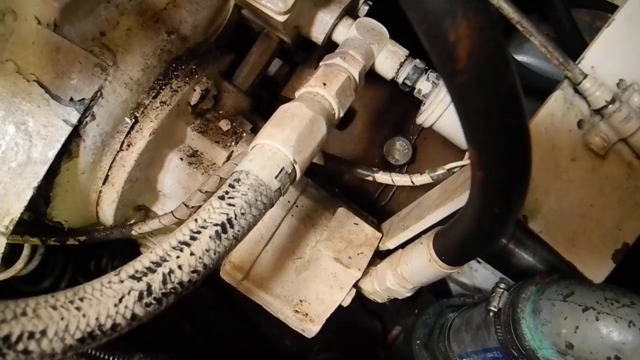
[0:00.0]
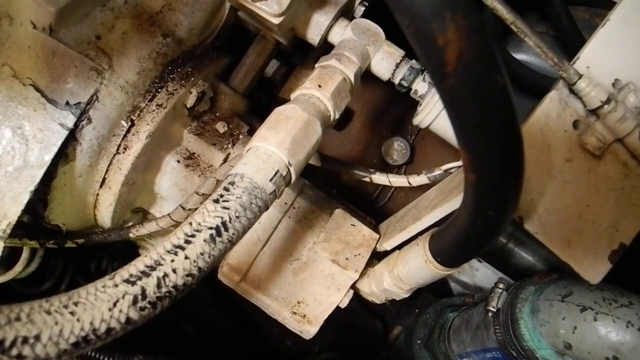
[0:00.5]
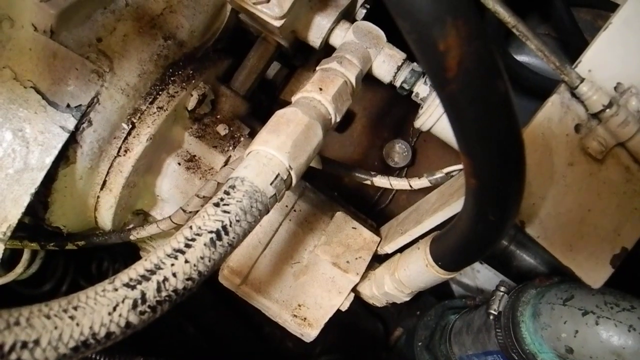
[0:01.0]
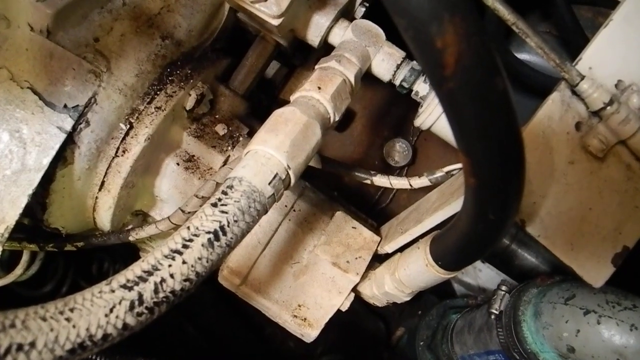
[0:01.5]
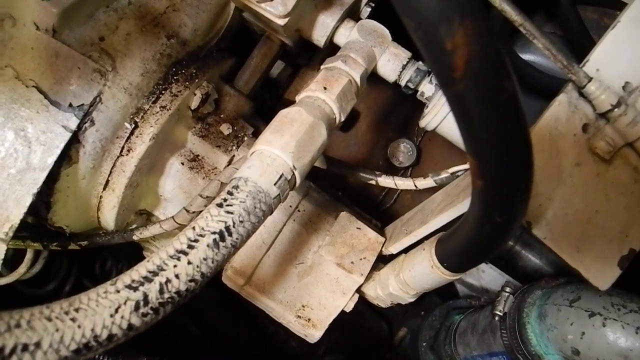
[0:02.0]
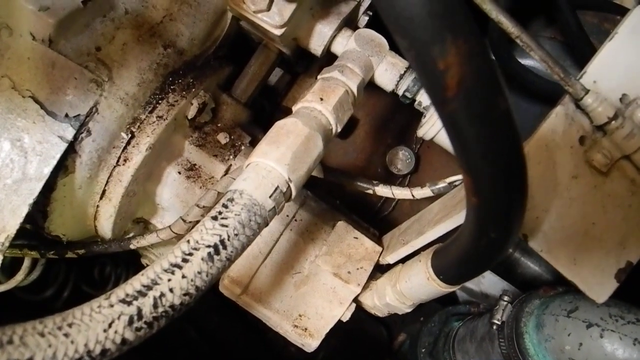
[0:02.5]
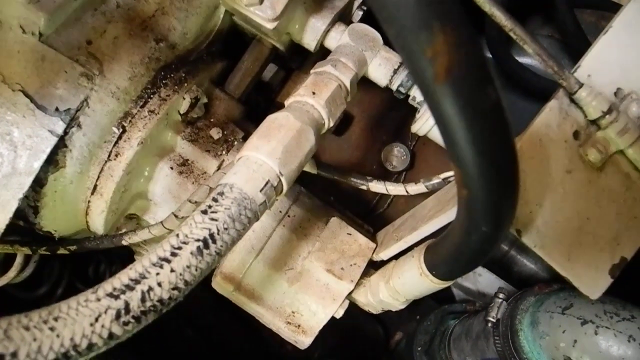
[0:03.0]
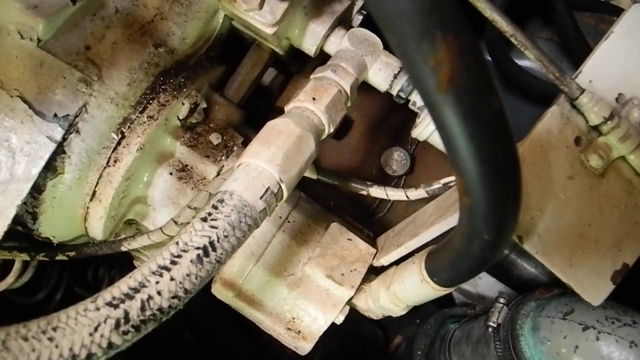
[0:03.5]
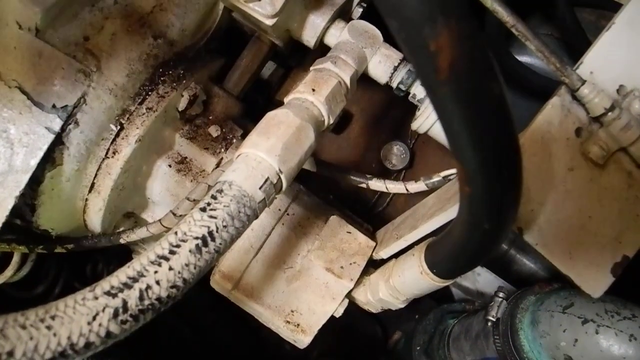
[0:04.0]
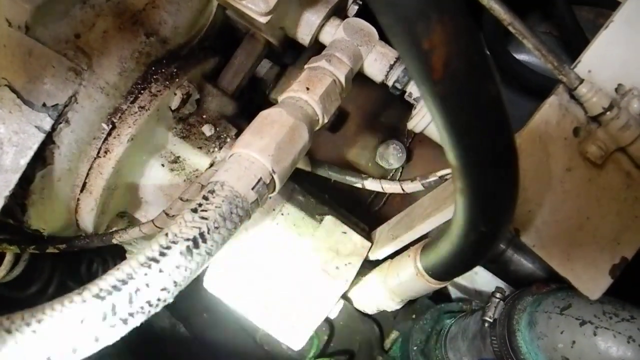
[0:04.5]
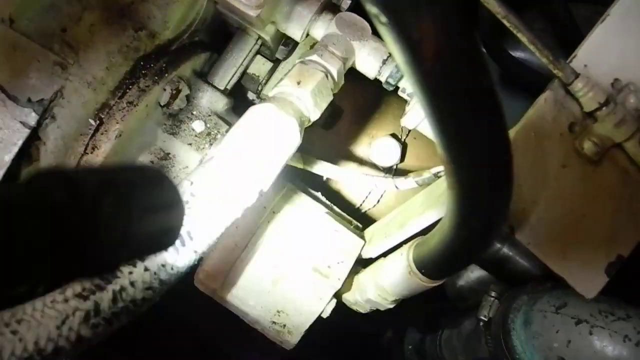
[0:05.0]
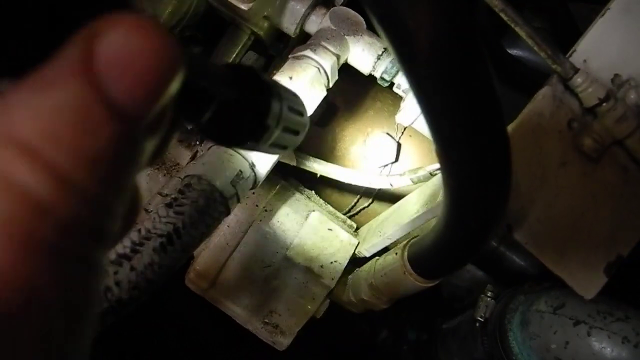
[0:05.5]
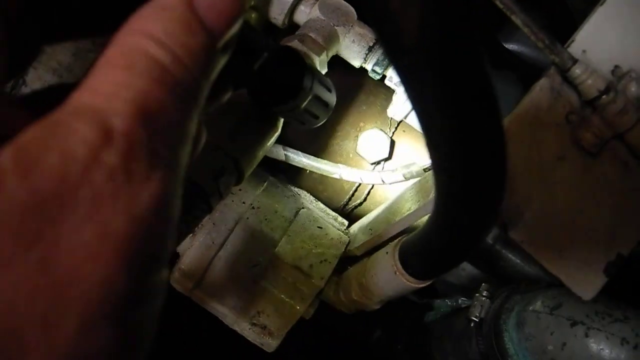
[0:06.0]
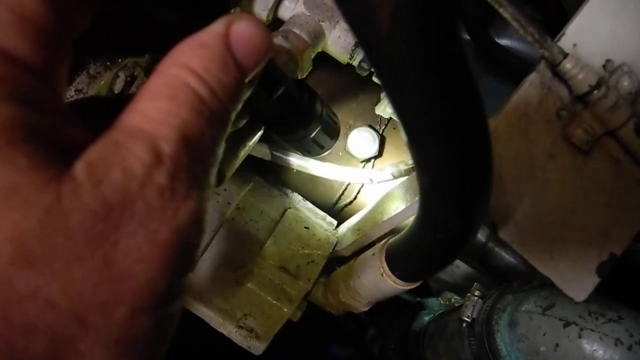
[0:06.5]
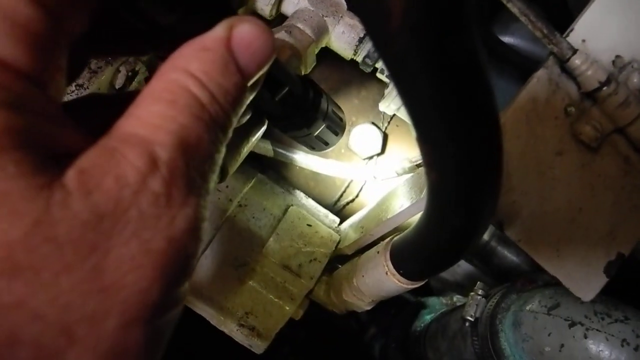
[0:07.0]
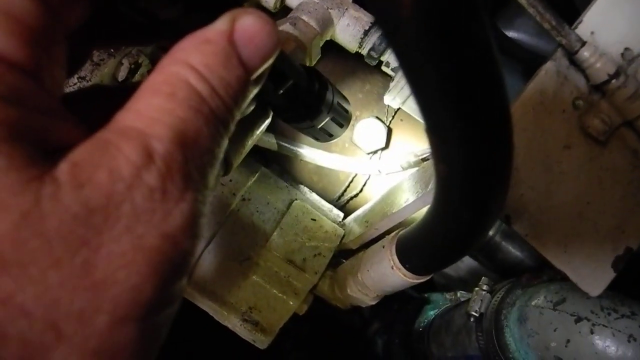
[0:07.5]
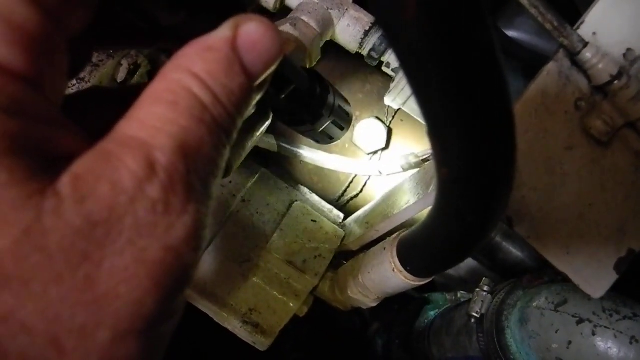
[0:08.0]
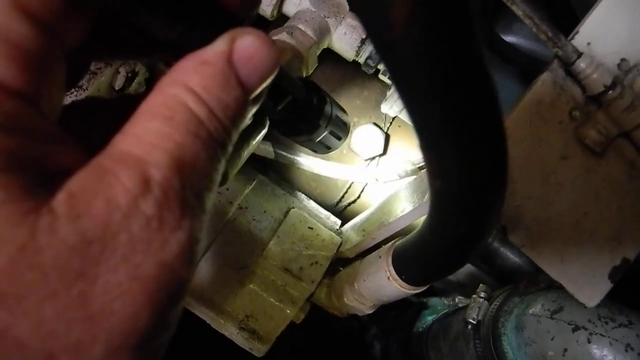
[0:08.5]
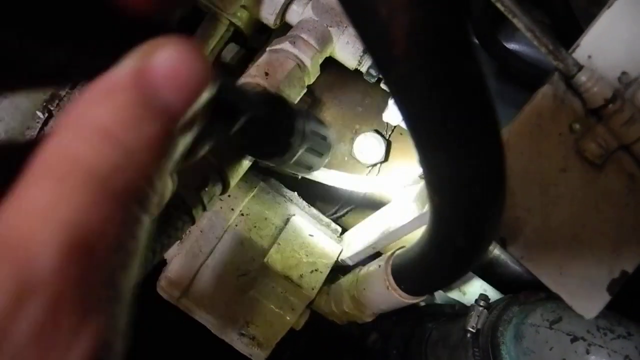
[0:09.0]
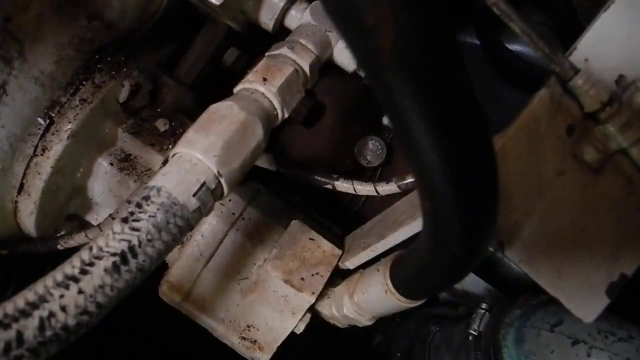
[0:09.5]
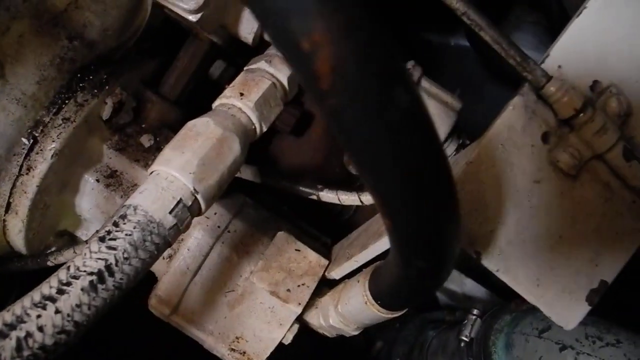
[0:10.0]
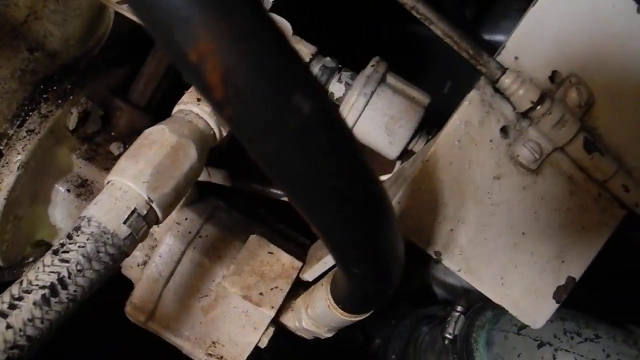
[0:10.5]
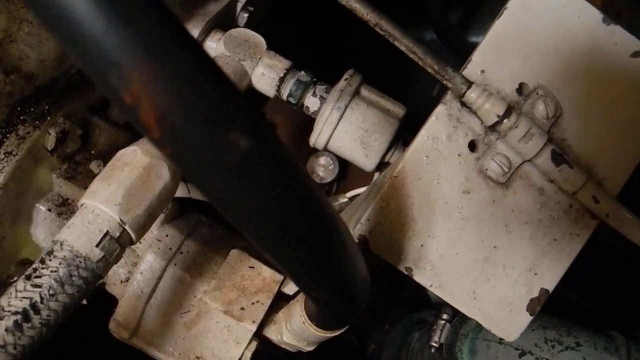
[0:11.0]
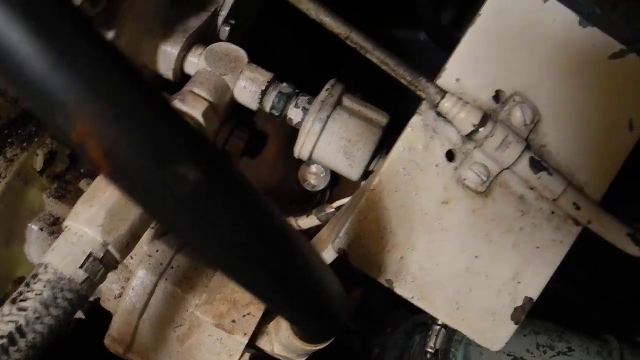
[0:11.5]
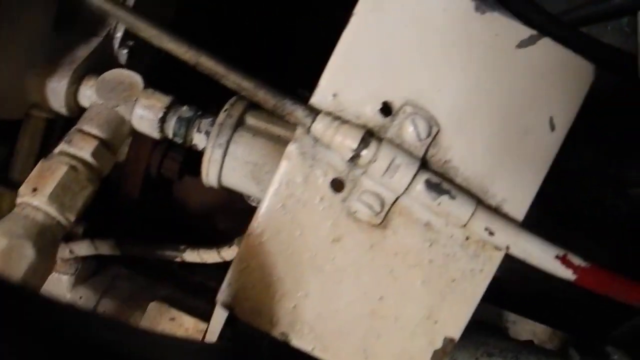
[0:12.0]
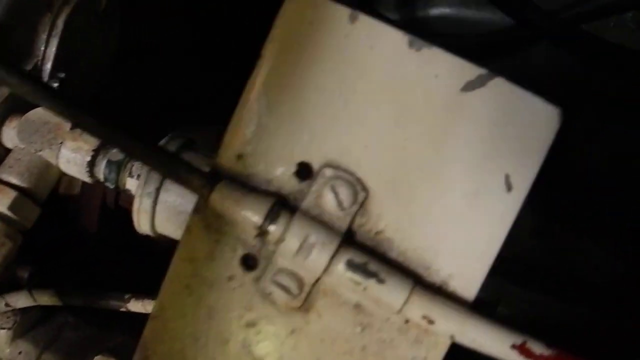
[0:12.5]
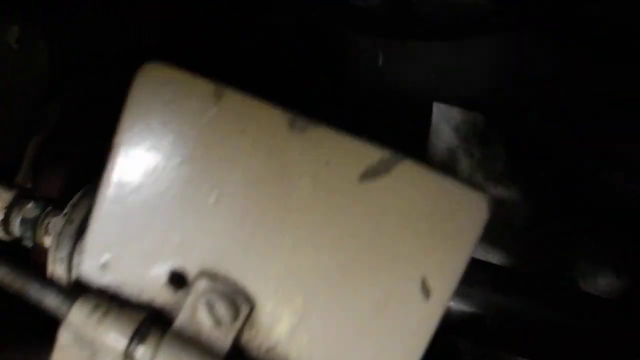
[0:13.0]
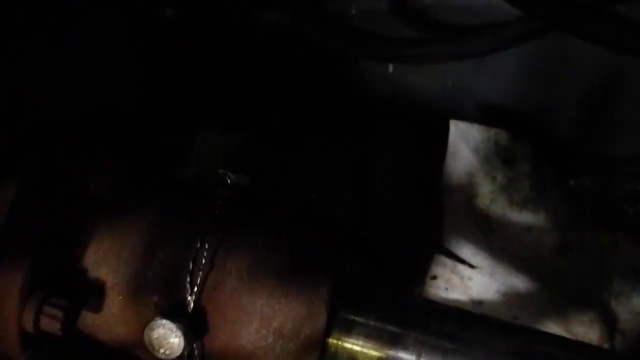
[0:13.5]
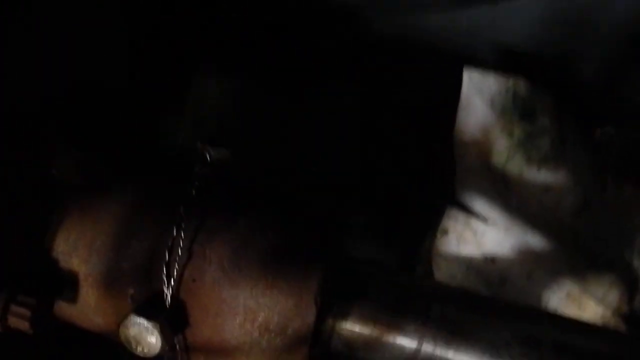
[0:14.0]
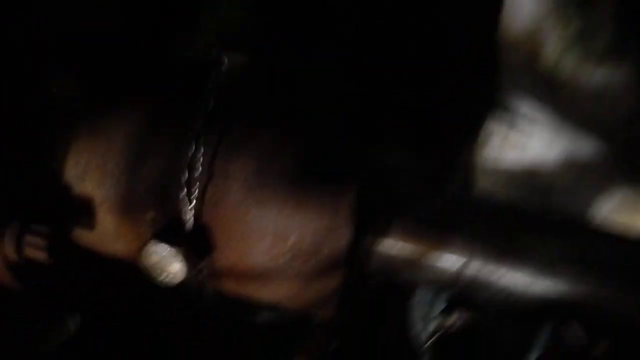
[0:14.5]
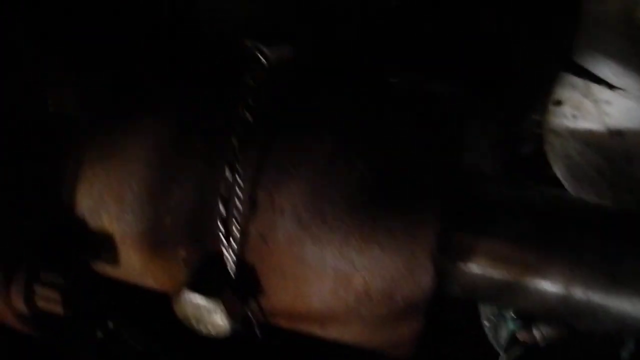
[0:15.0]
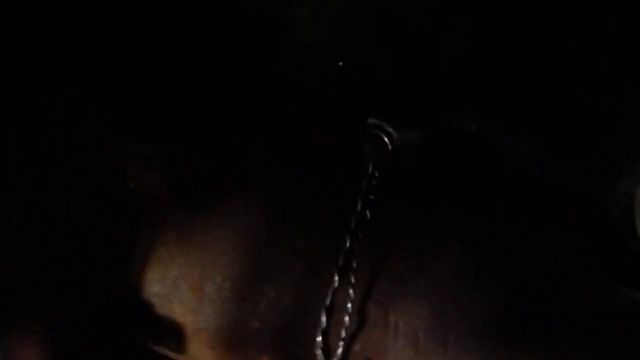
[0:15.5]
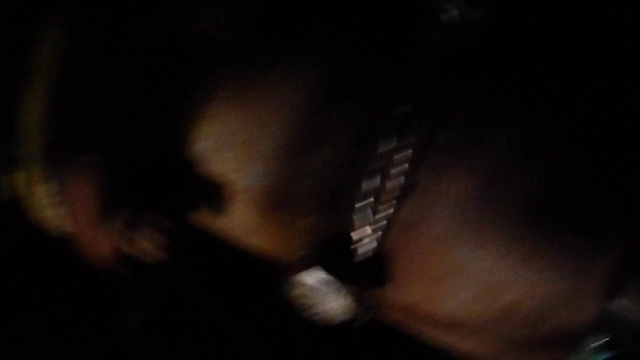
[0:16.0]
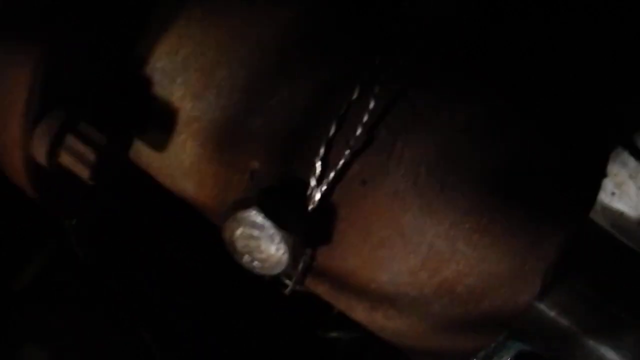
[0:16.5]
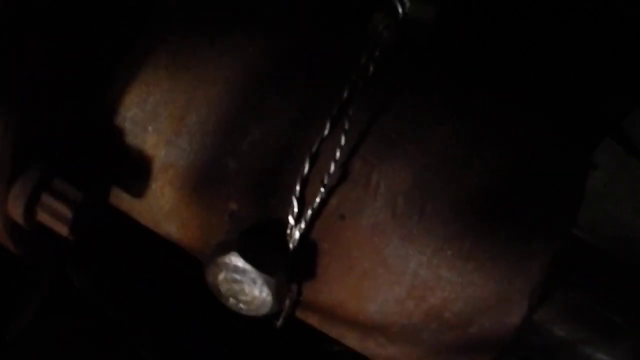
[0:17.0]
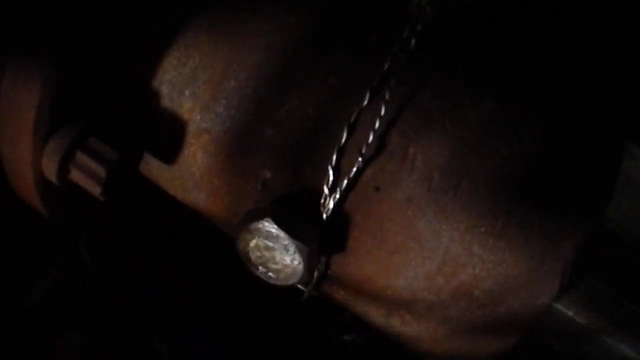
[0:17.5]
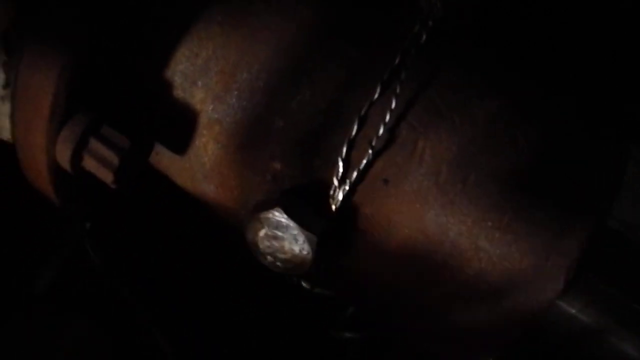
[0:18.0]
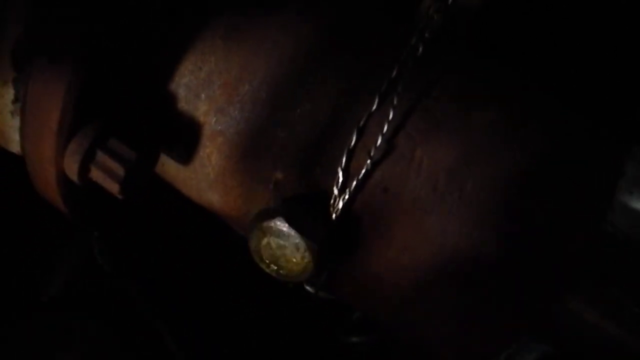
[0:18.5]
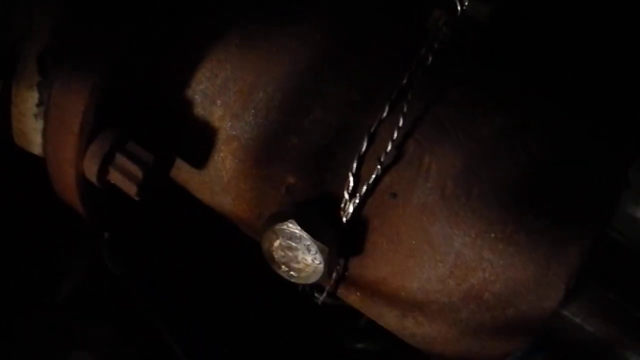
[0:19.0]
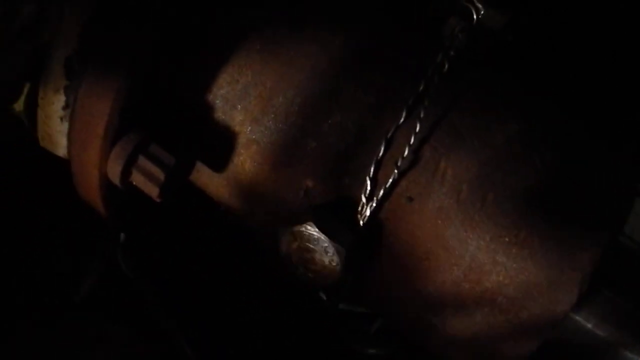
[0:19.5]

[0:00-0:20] The video opens on what appears to be the inside of a car engine. Sort of toward the top right of the screen, a black hose comes down and curves over toward the bottom middle of the screen. A white part is connected to a metal piece that might be an alternator. On the bottom left of the screen, another black hose, covered in white stuff, is connected to another metal piece. The camera is slightly shaking as it stares down at this piece. A left hand comes in from the right side of the screen, the person's thumb extending from the bottom right to the top of the screen. They are holding a small black flashlight and shine it on a bolt down in the middle of the screen. They pull the flashlight away and their hand disappears. The camera then pans over and looks down into the engine or something, where there is a rusty brown piece with a bolt on it and what looks like a silver string around the bolt.